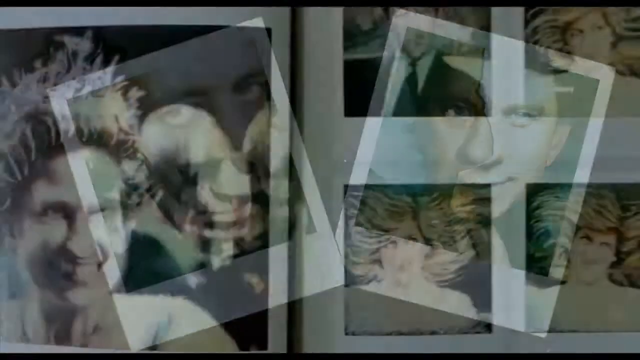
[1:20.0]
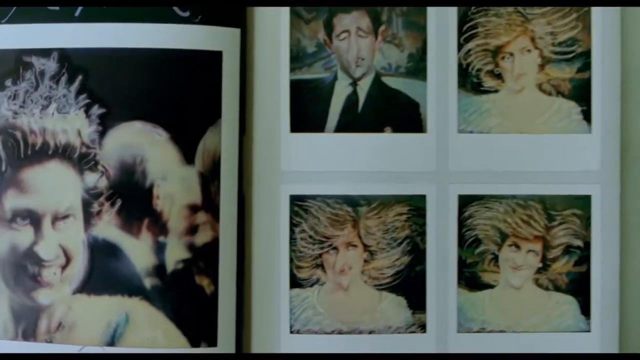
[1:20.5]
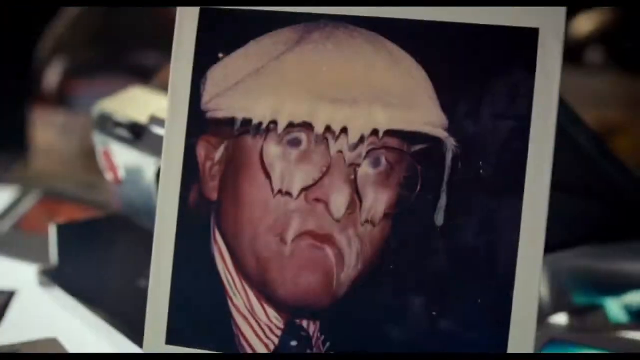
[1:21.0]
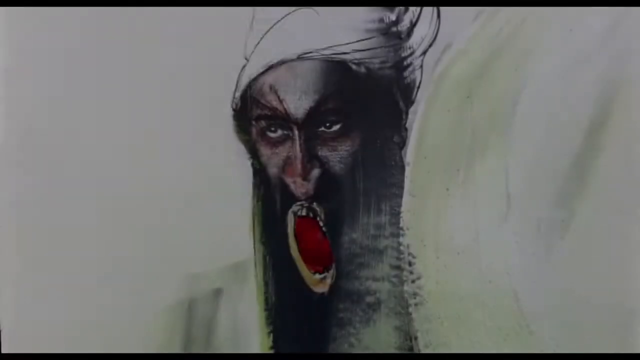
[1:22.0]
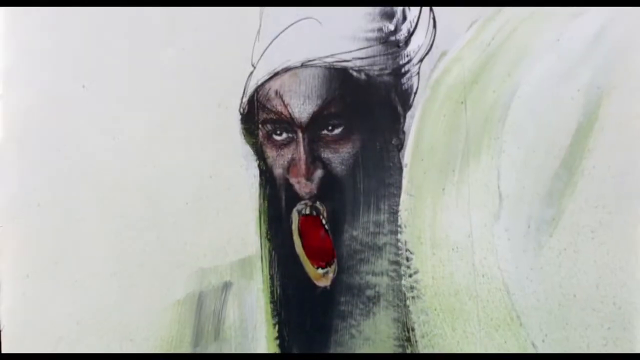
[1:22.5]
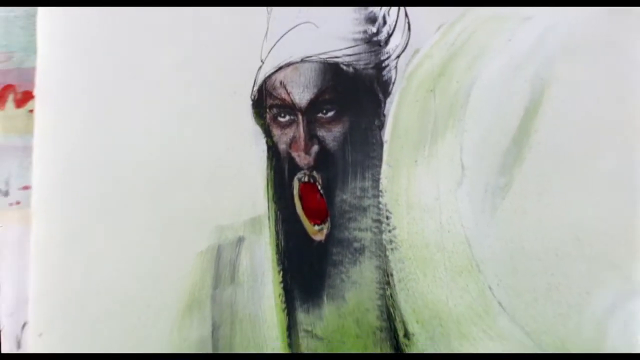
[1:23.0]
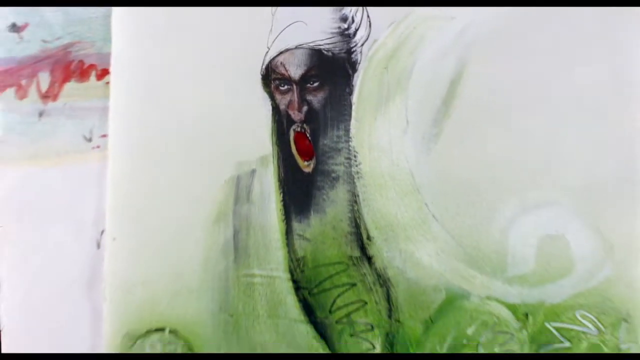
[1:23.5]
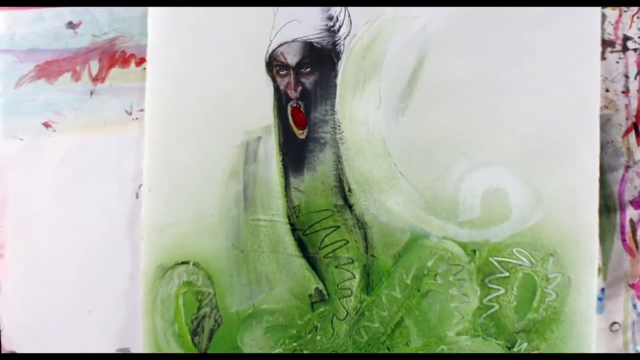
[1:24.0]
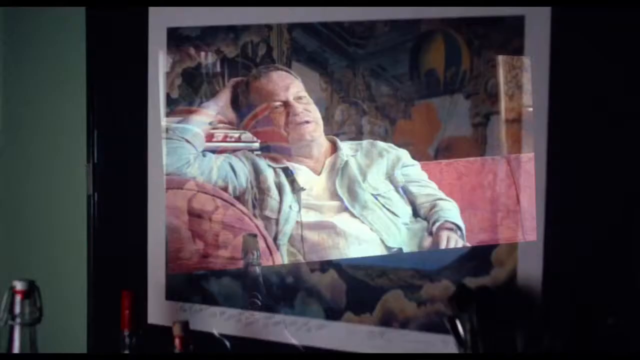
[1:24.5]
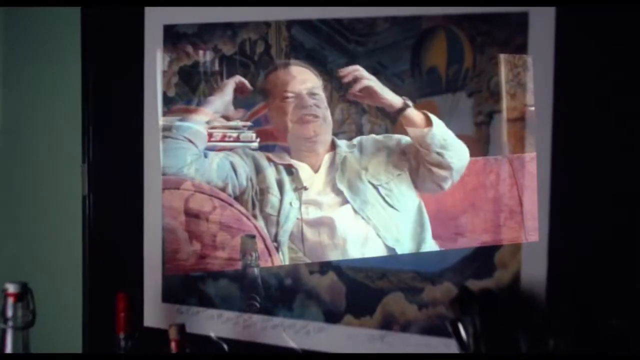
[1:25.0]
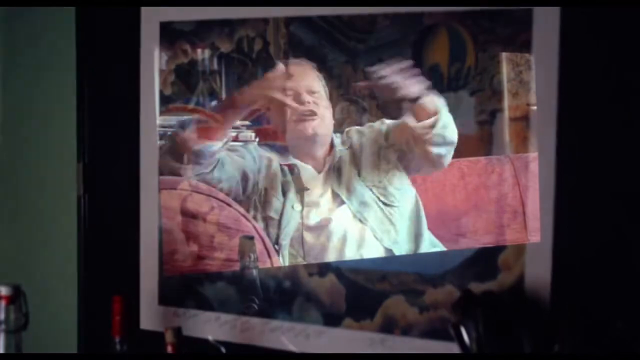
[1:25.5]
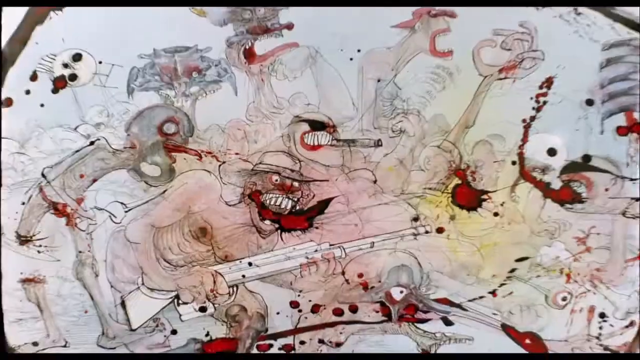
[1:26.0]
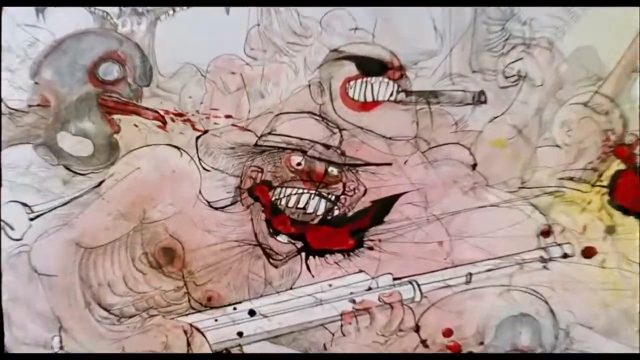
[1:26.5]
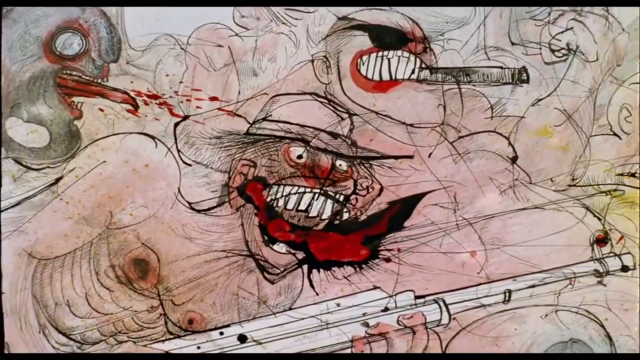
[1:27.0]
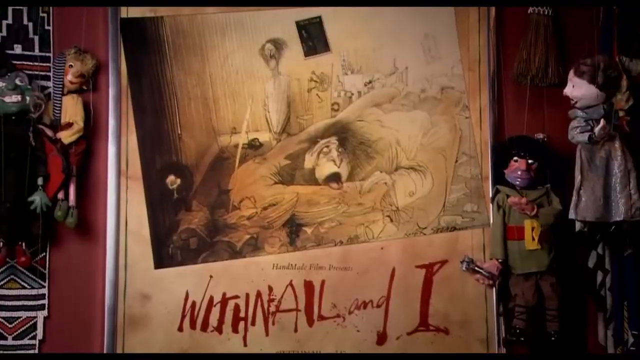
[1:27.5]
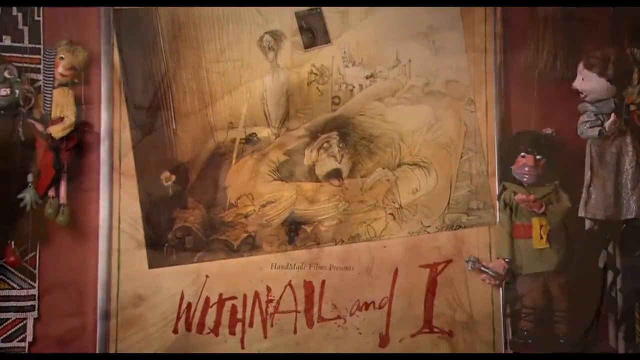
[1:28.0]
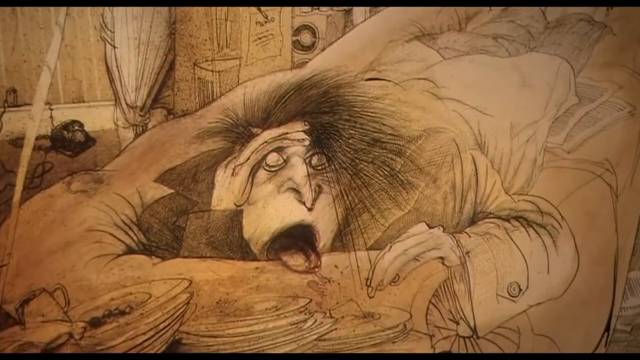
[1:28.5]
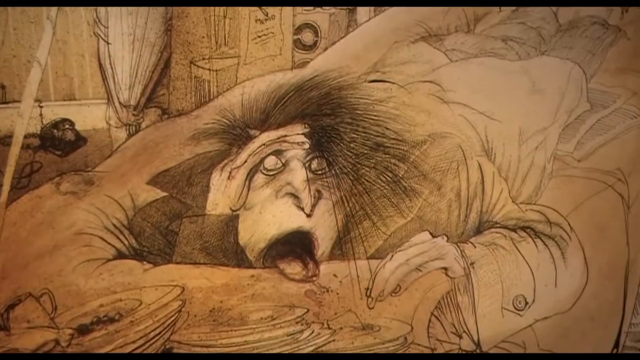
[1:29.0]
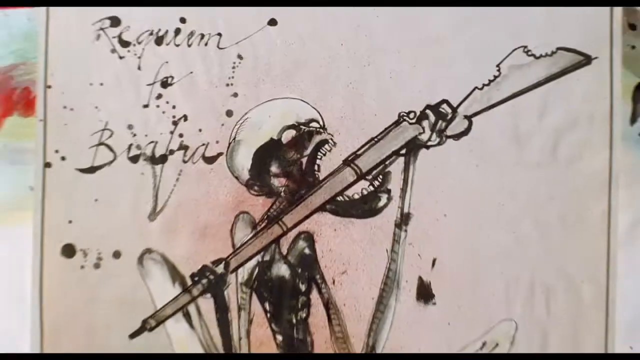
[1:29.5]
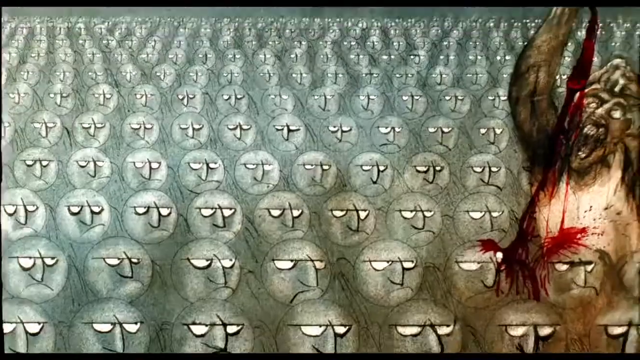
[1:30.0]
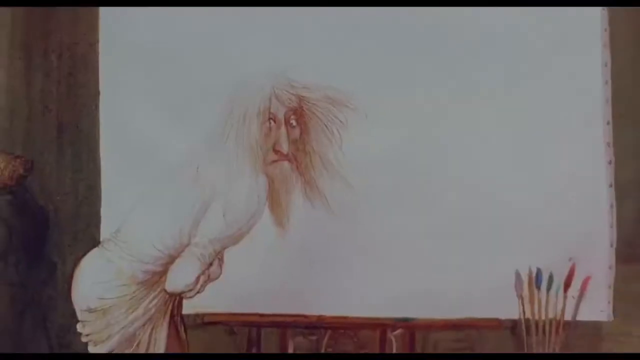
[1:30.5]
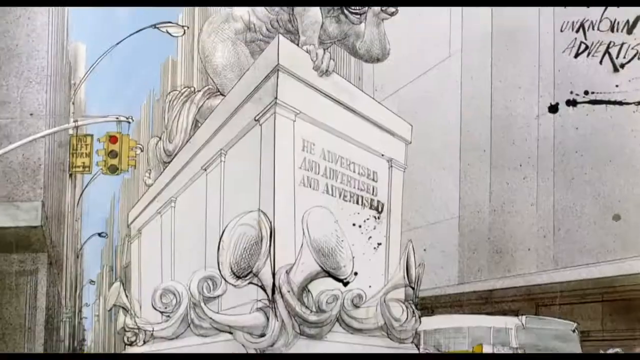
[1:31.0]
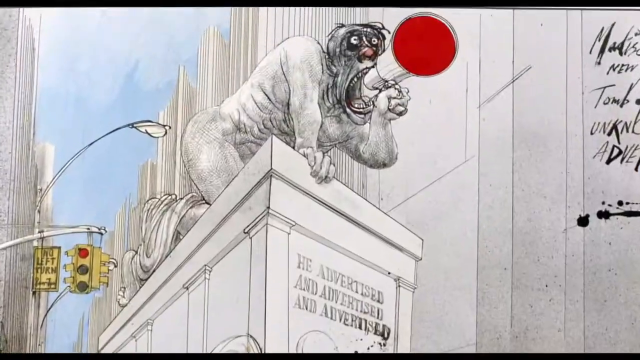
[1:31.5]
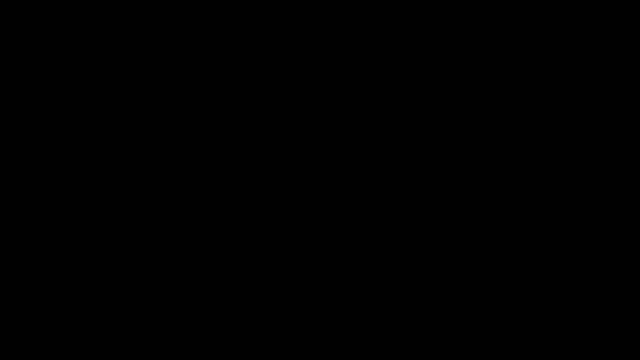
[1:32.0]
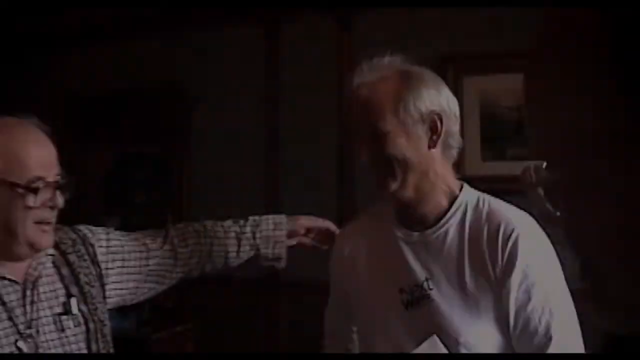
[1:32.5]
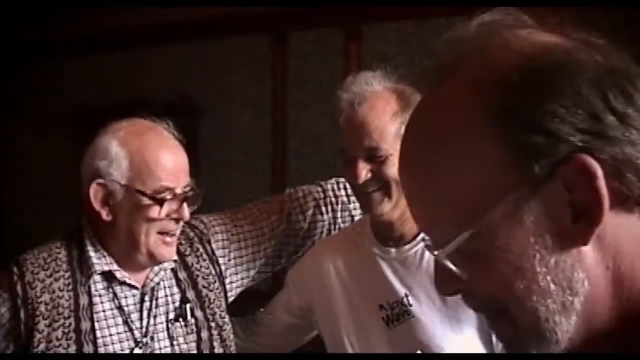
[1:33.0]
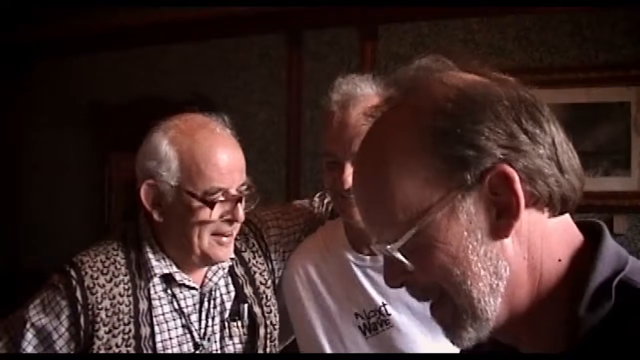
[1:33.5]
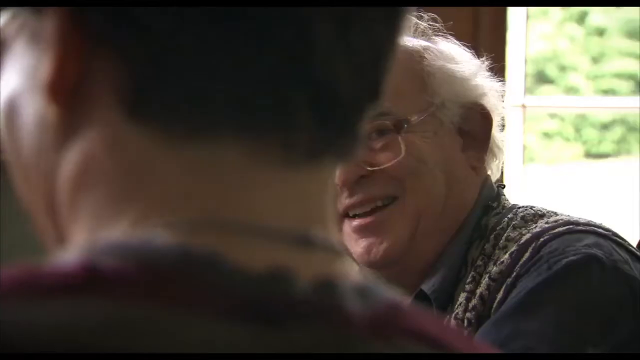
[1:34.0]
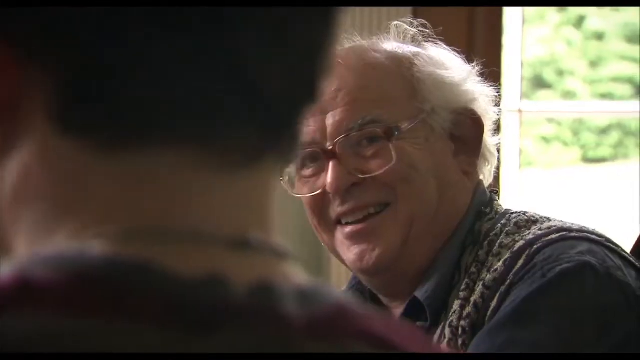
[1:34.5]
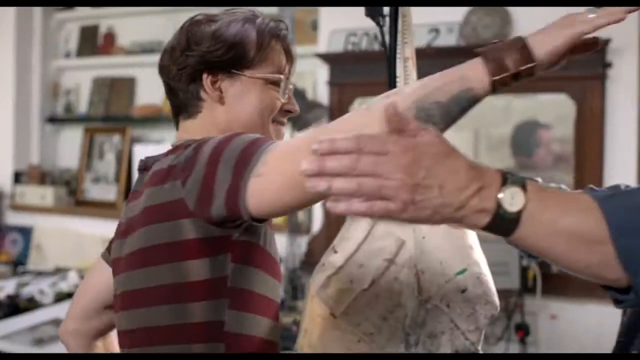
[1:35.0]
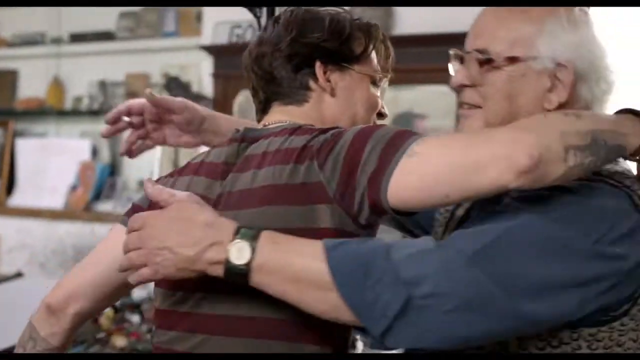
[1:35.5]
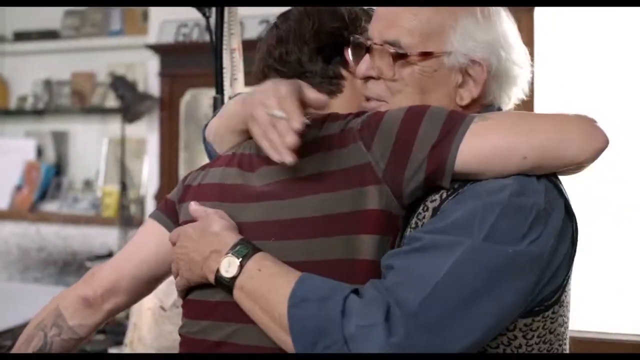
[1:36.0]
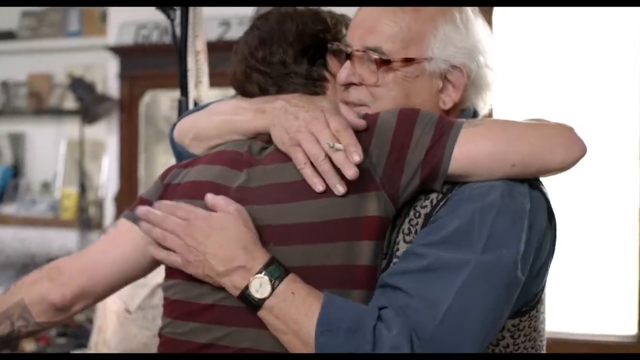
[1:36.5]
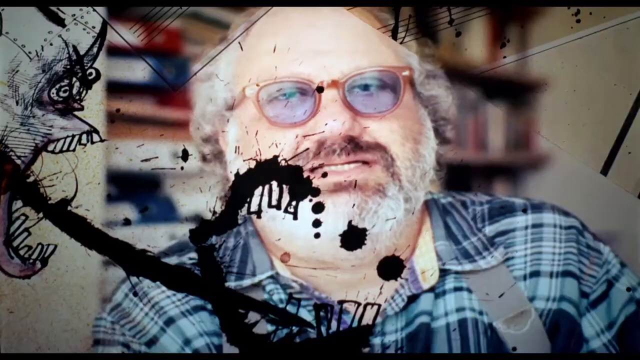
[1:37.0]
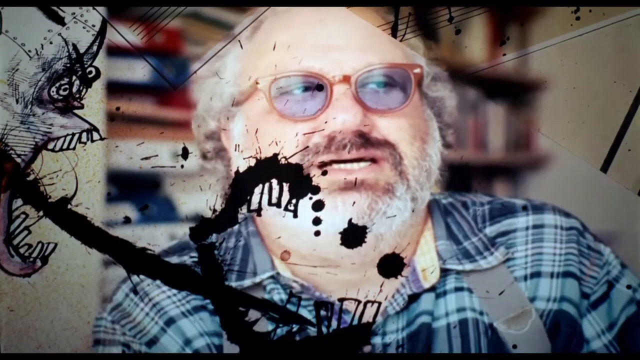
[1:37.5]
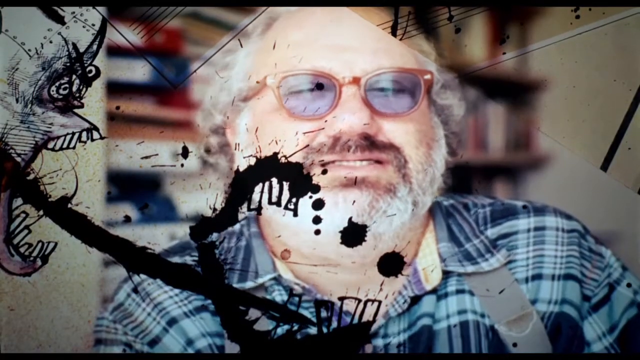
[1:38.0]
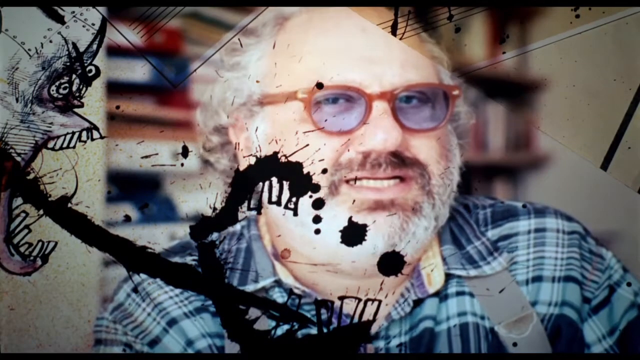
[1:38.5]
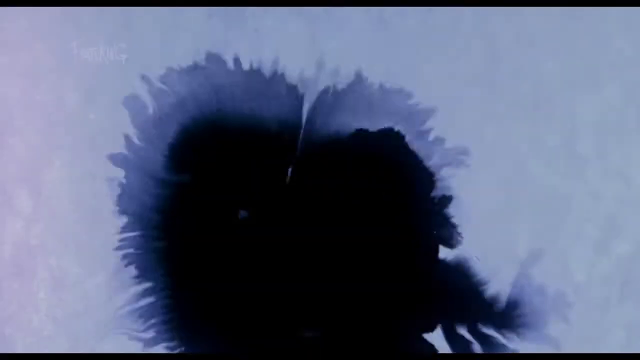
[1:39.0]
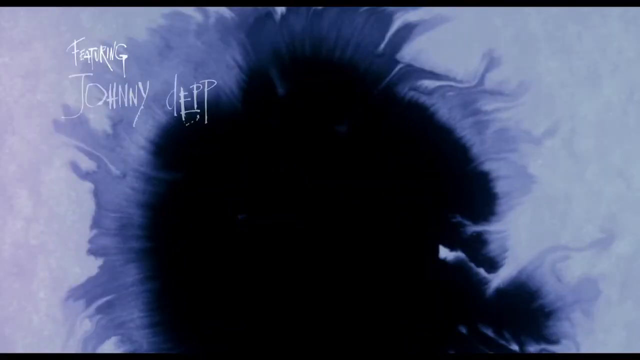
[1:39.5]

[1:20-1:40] Images of Osama Bin Laden, drawn in a distorted style, are shown. The horrific images appear both on paper and on screens. Three men hug each other at a Toronto Film Festival. Johnny Depp is featured.